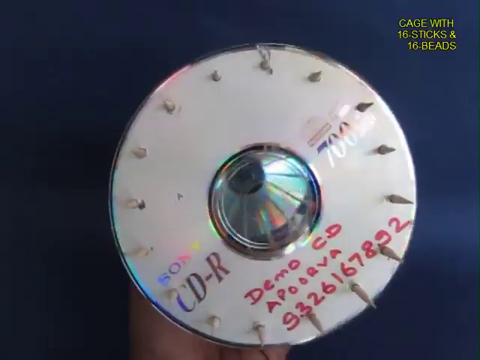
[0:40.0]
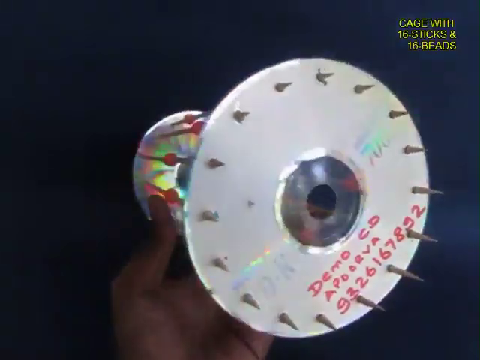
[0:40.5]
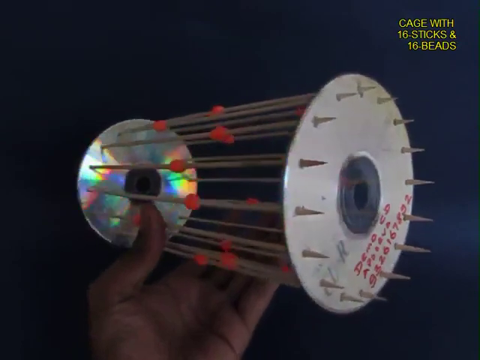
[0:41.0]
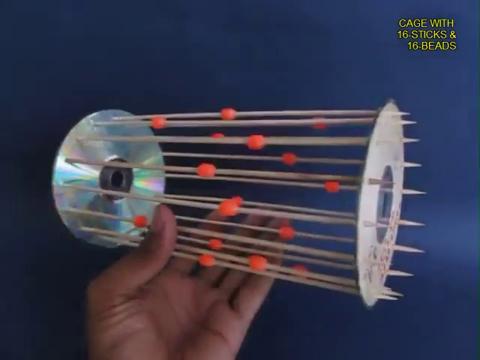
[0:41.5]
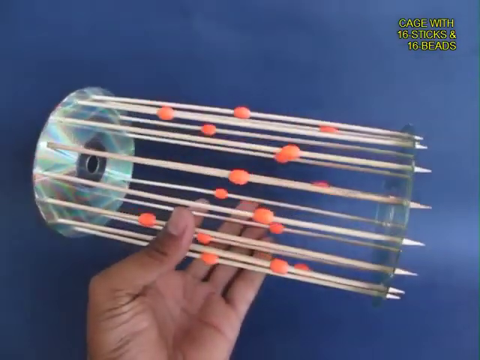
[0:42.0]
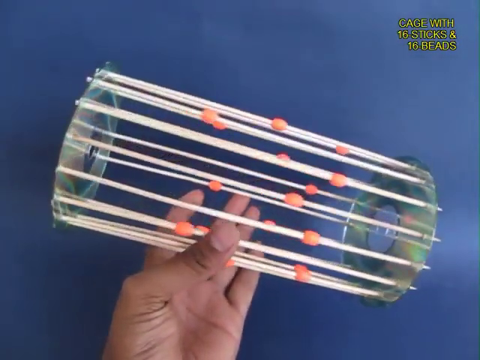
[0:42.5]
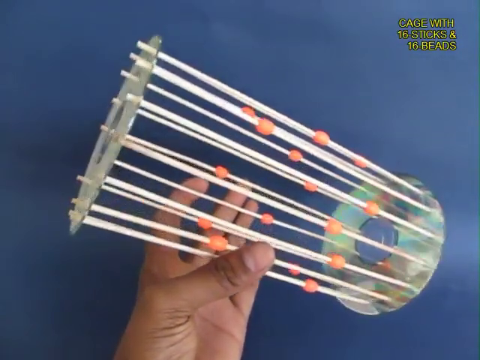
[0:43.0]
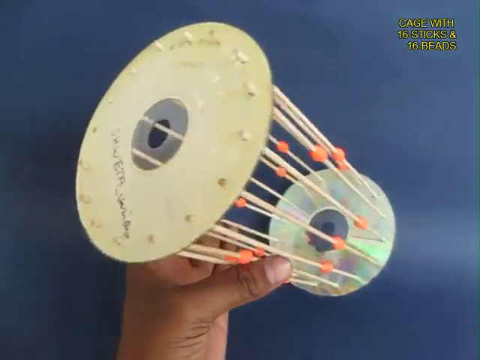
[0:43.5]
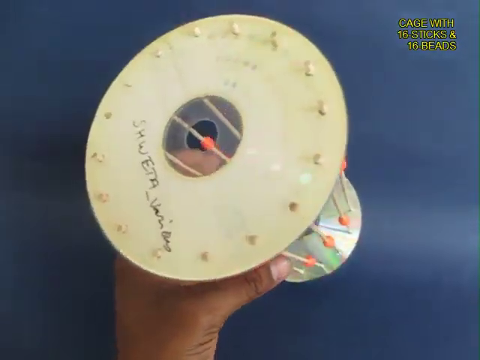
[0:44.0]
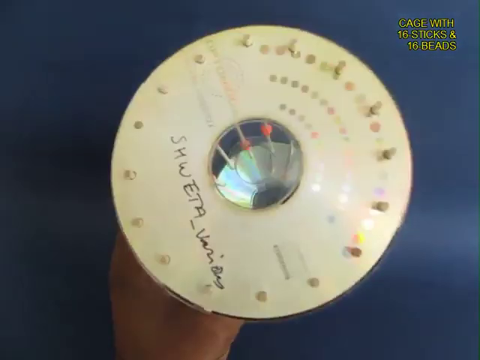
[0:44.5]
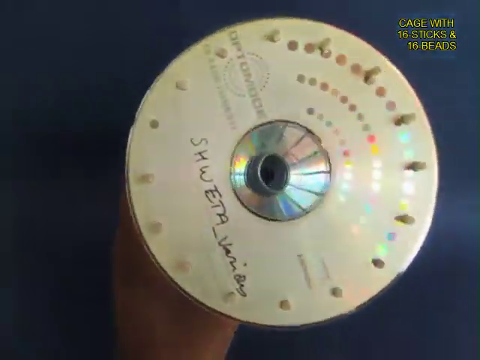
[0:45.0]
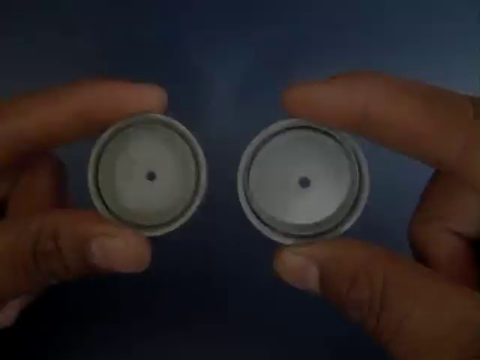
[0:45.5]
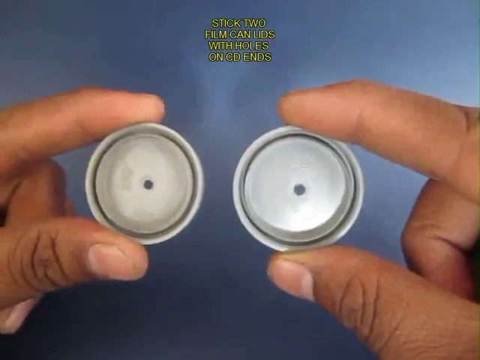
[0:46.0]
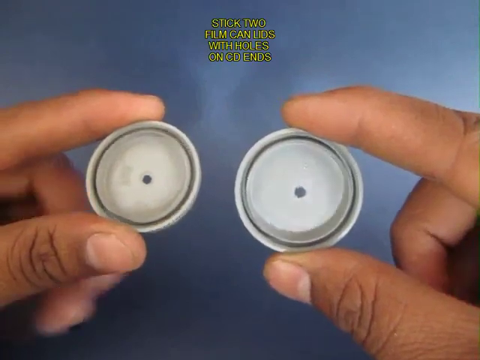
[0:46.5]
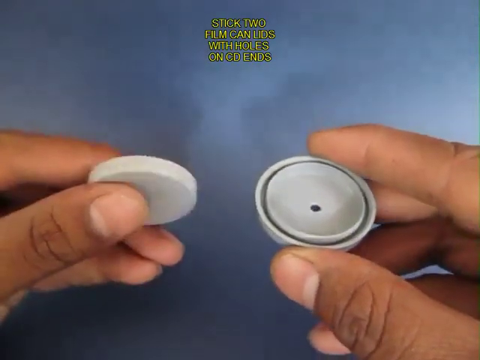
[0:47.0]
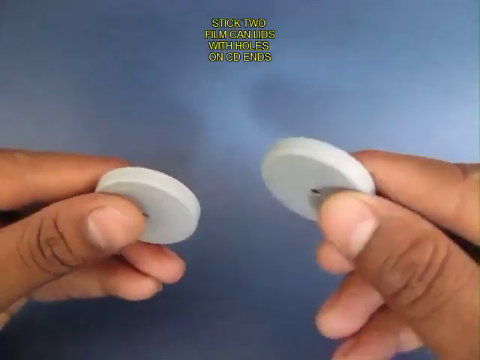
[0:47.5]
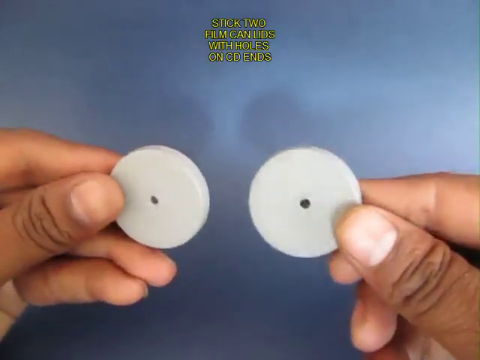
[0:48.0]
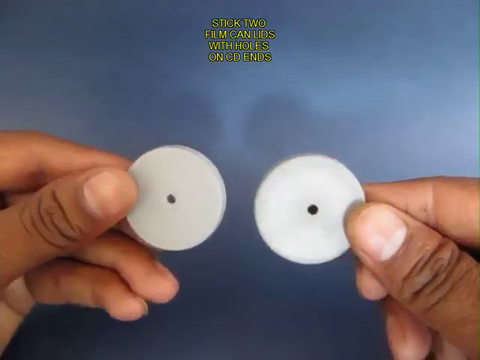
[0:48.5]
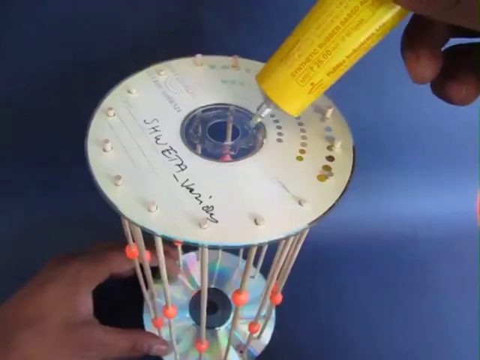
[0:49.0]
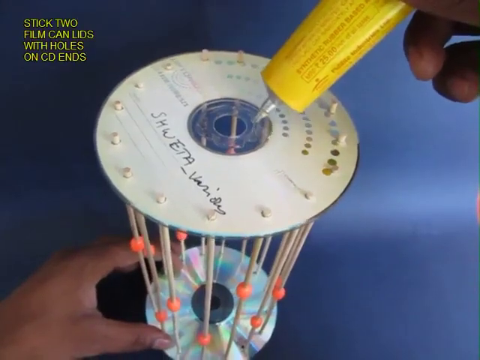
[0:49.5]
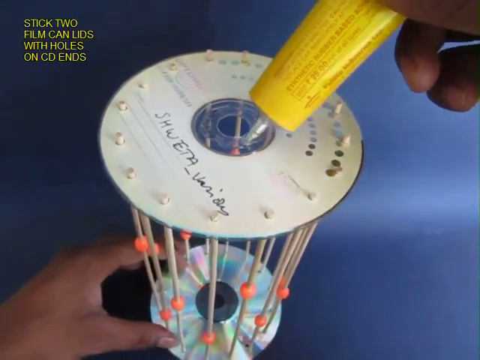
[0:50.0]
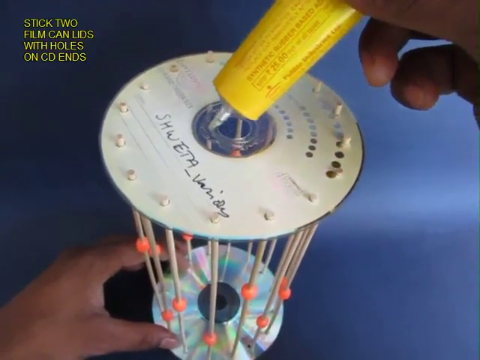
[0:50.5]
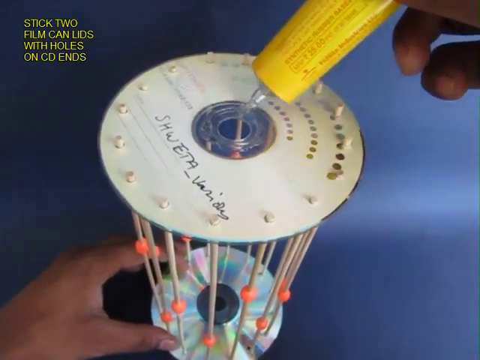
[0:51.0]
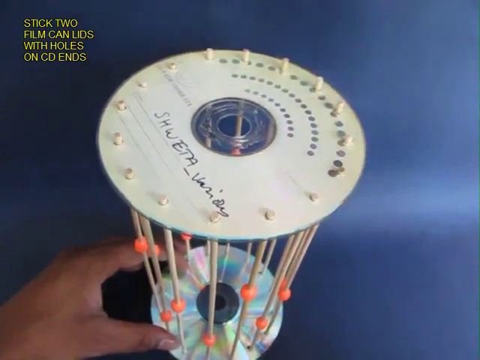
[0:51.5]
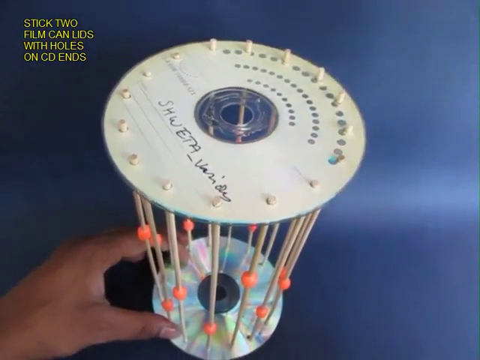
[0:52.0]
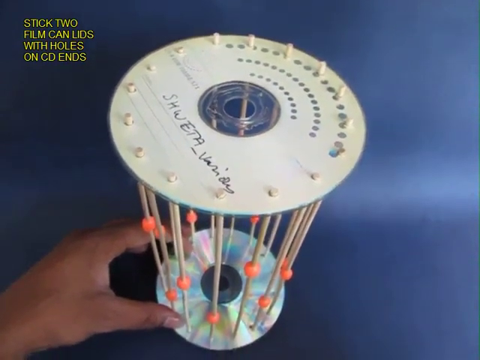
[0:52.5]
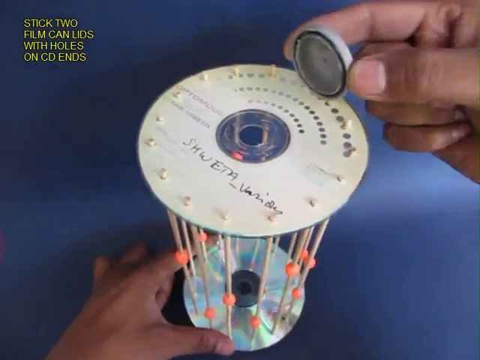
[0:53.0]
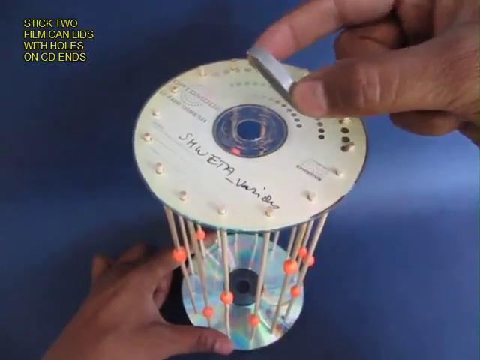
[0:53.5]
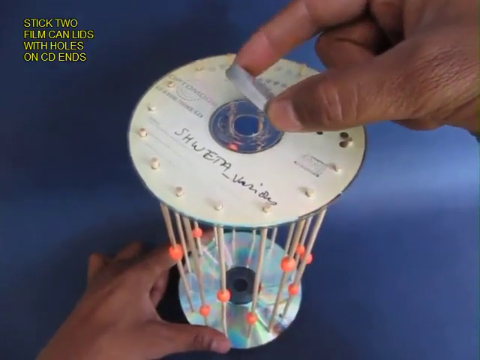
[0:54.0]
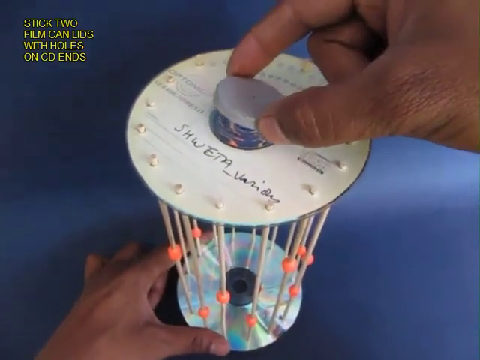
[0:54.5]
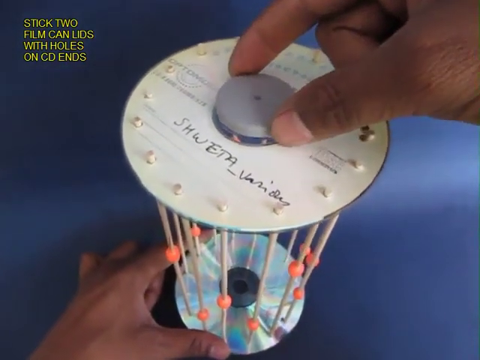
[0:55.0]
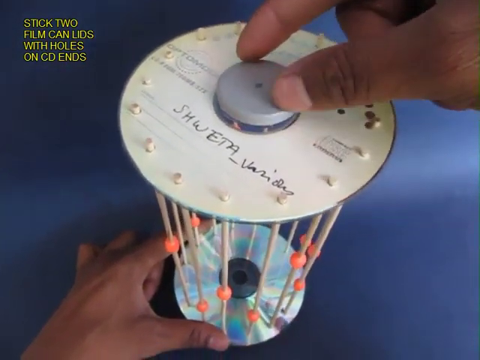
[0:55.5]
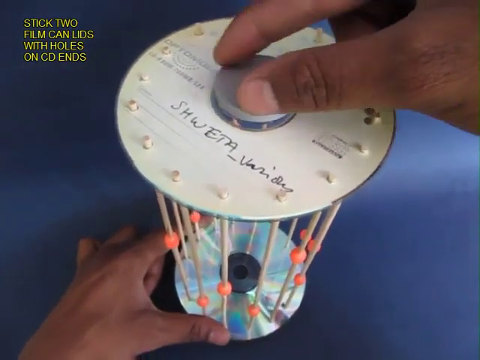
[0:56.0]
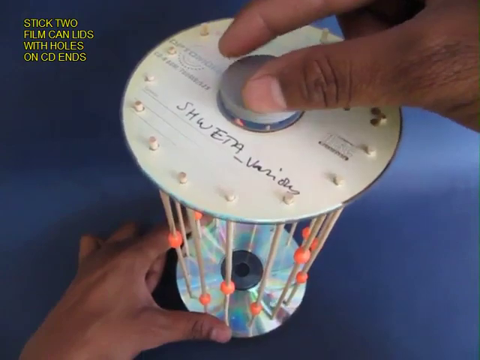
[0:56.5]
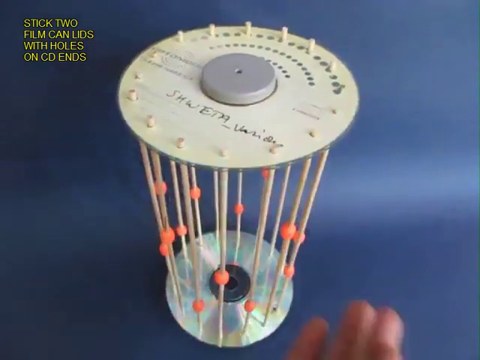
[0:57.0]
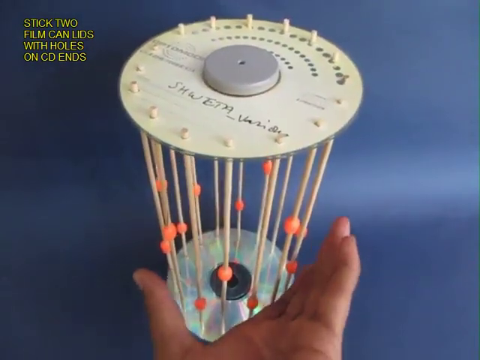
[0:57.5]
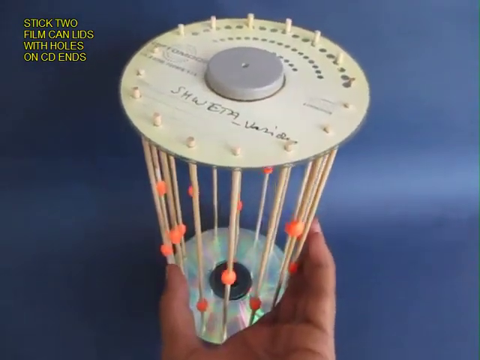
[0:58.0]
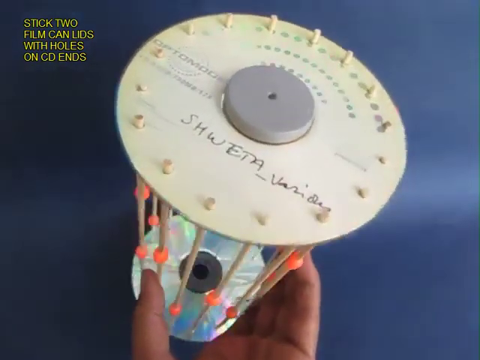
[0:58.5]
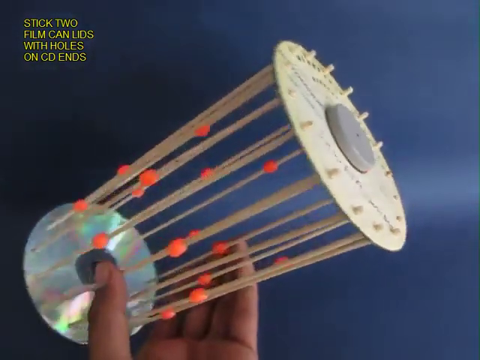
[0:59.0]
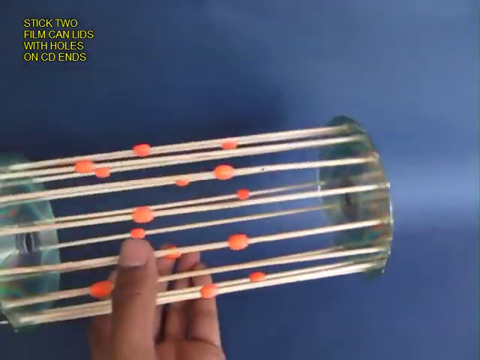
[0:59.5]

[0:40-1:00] The view is on one of the CDs, with the pointy tops of the skewers sticking out of it through the holes. Red writing on the CD reads "Demo CD, APOO RVA" along with the numbers 3326167892. In the upper right corner of the screen, yellow text reads "cage with 16 sticks and 16 beads". The teacher uses his hand to rotate the tube of skewers, CDs and beads all the way around to show how it looks. The second CD on the other side of the tube has "SAWETA" written on it, along with other writing that is not very discernible. He holds up lids with holes for the CD ends and flips them around to show their backs and fronts. He then applies glue to a CD and sticks a cap onto it at the bottom. The caps need to dry for a minute, and then he applies one to the second side.